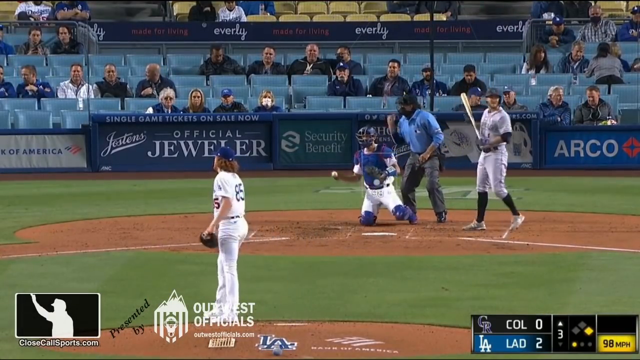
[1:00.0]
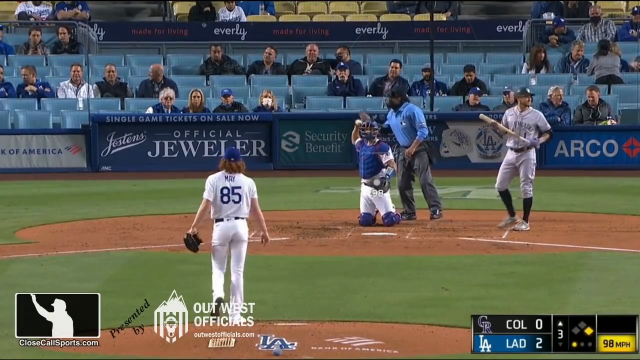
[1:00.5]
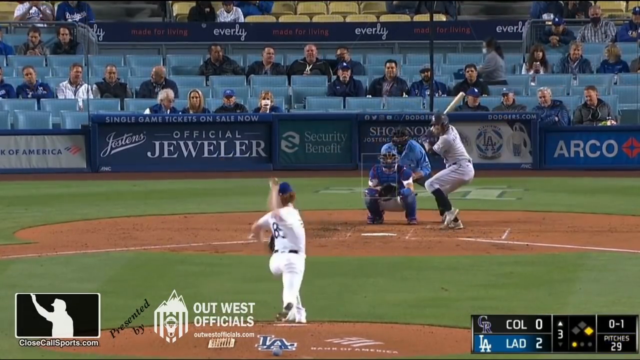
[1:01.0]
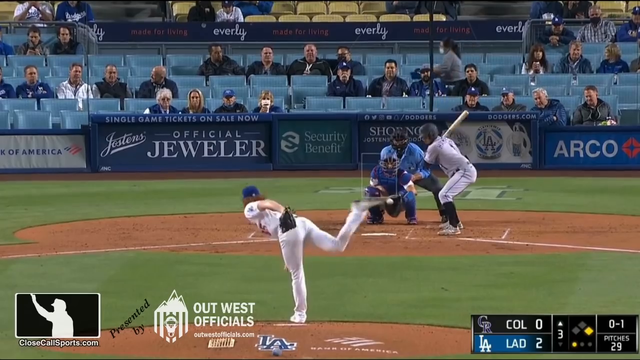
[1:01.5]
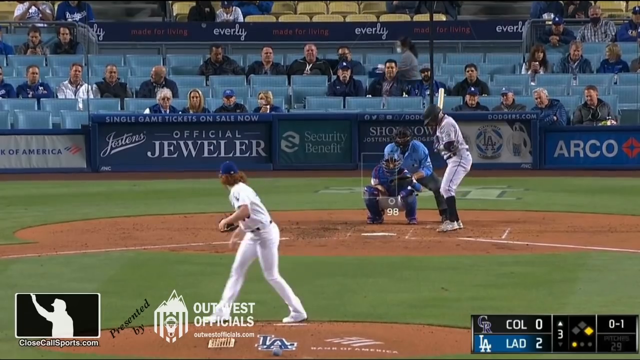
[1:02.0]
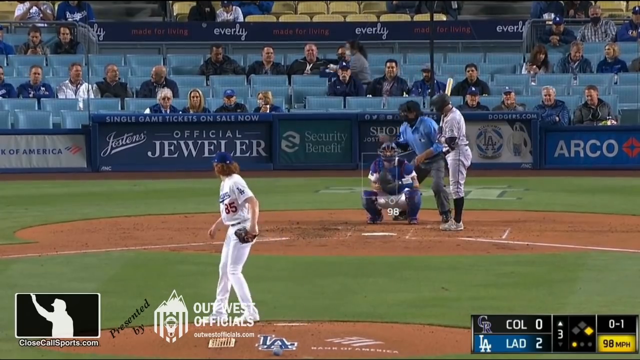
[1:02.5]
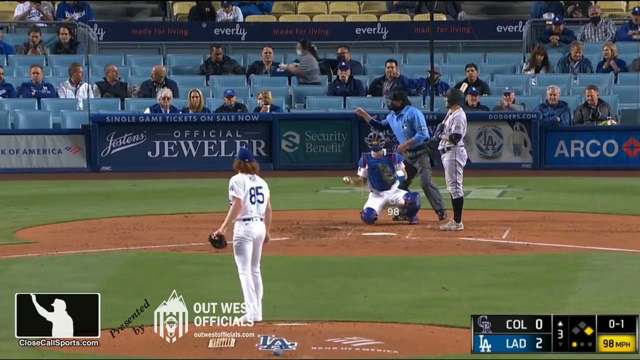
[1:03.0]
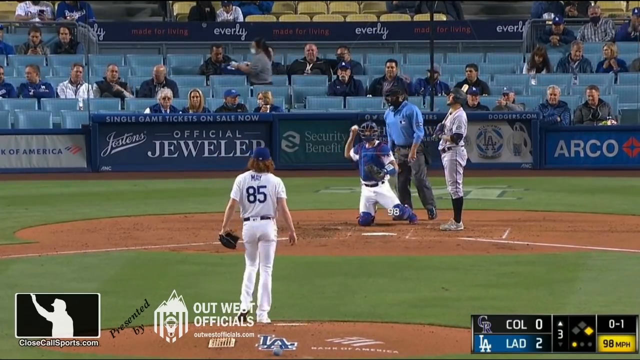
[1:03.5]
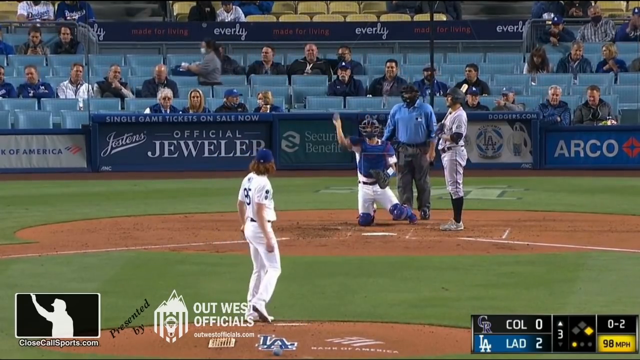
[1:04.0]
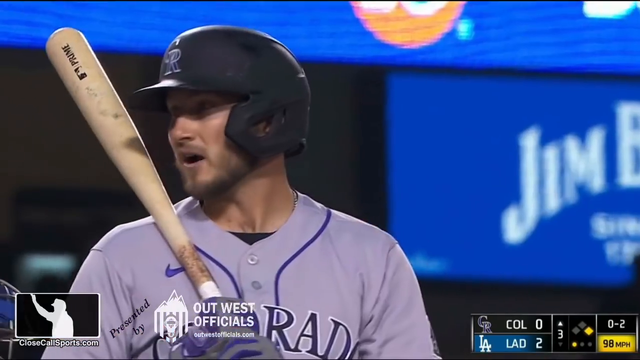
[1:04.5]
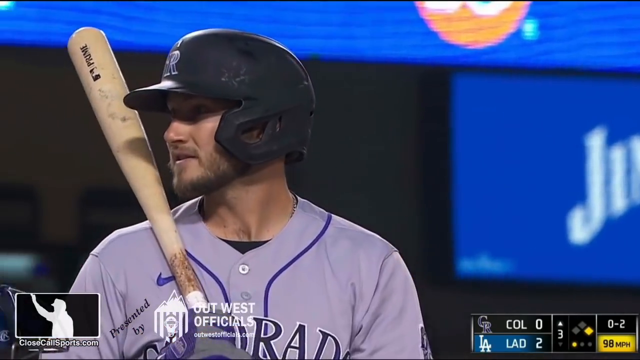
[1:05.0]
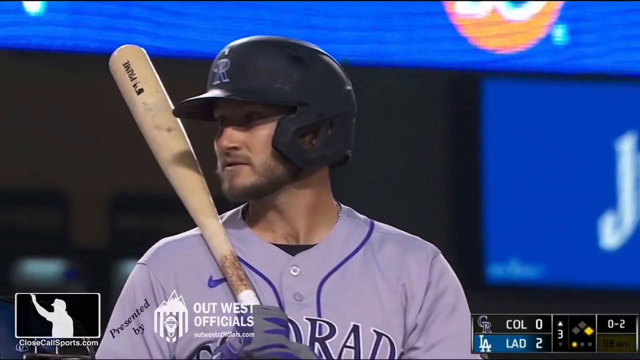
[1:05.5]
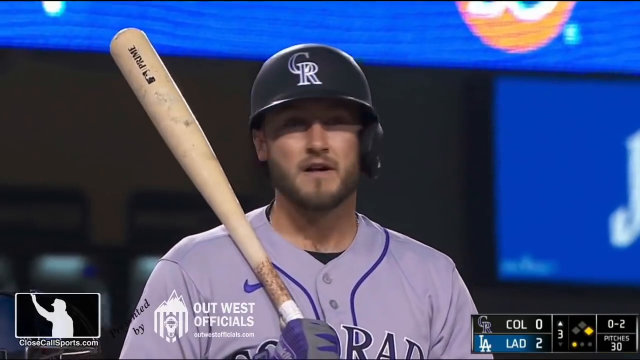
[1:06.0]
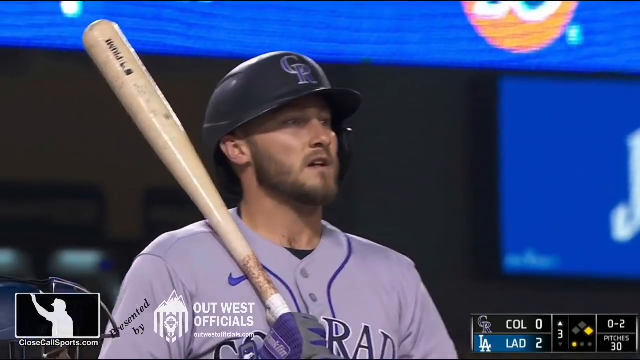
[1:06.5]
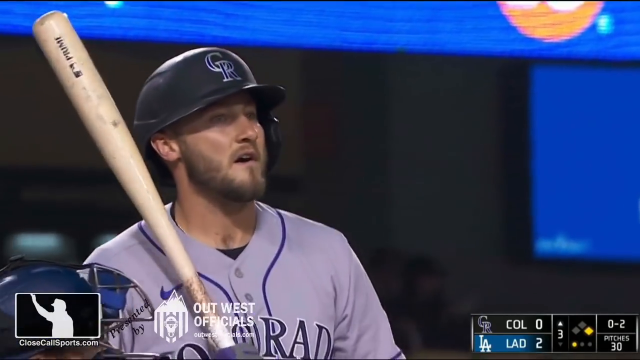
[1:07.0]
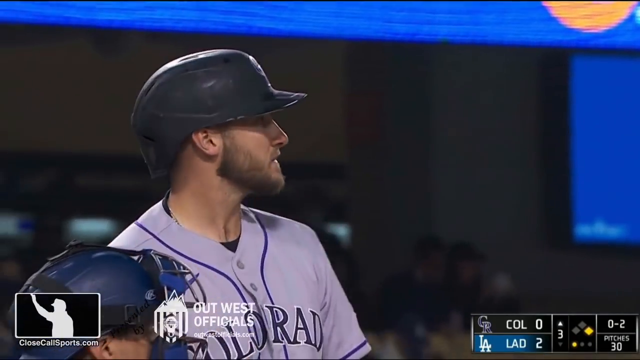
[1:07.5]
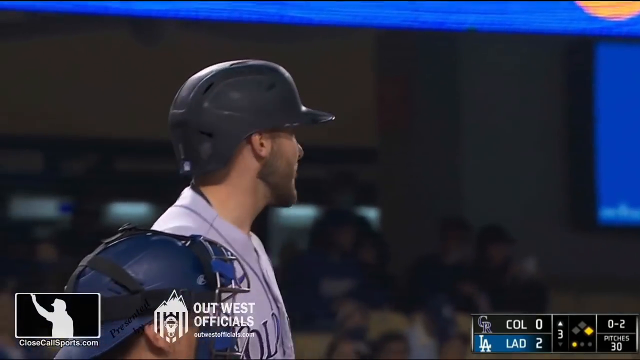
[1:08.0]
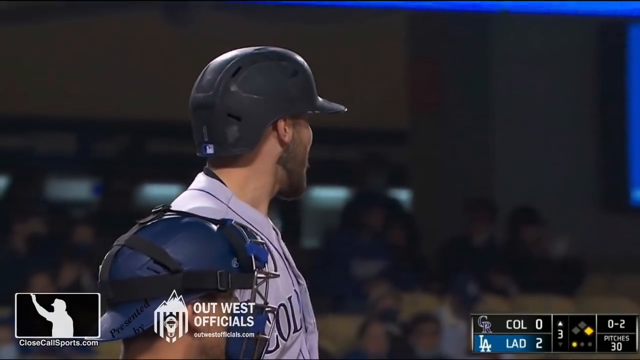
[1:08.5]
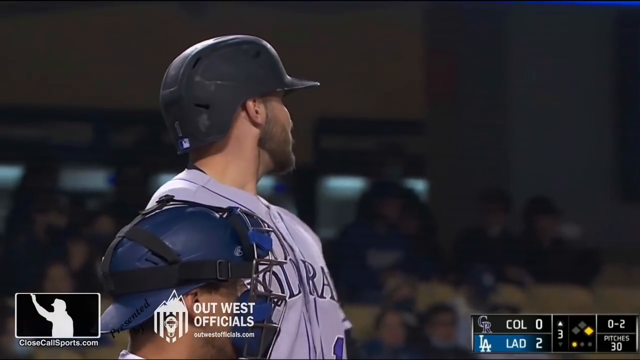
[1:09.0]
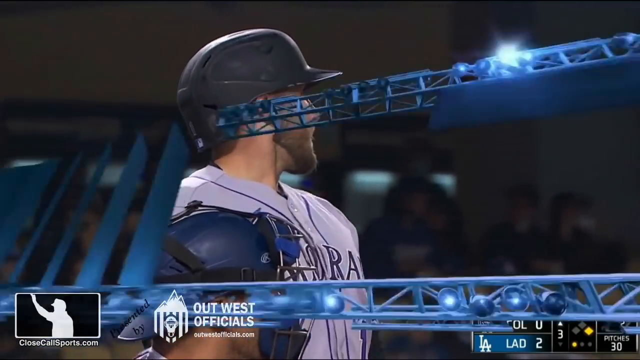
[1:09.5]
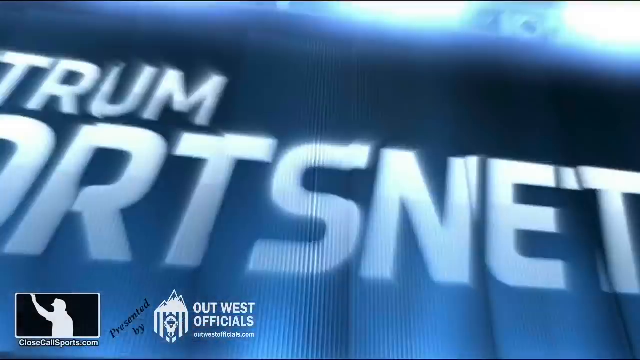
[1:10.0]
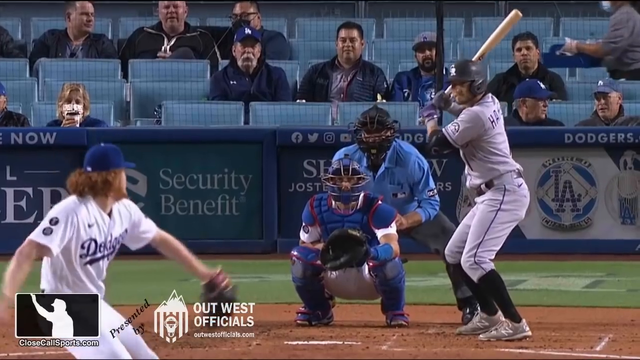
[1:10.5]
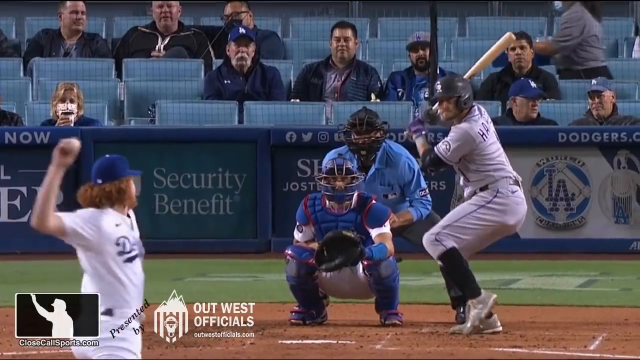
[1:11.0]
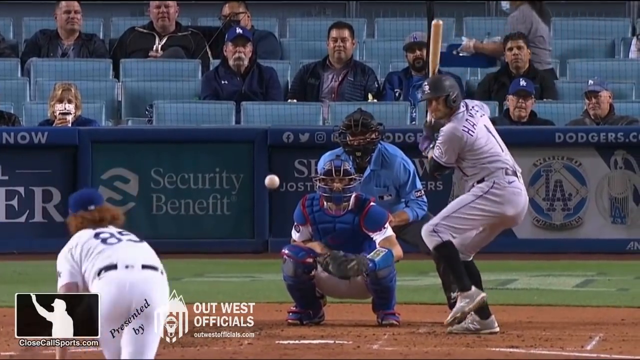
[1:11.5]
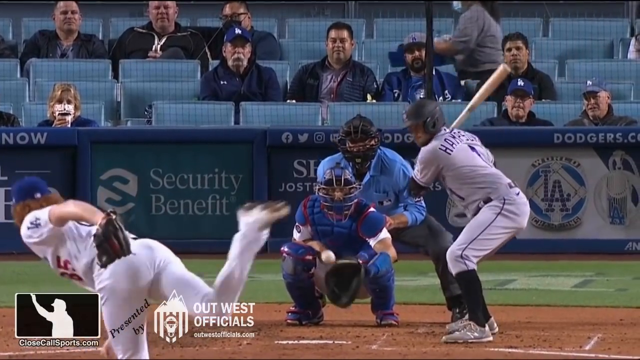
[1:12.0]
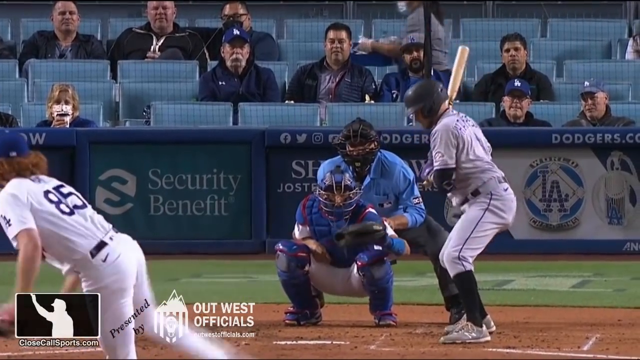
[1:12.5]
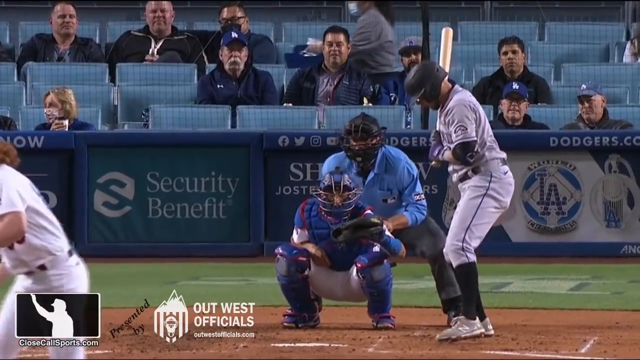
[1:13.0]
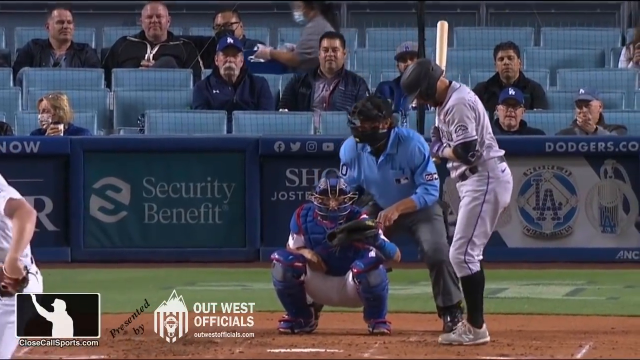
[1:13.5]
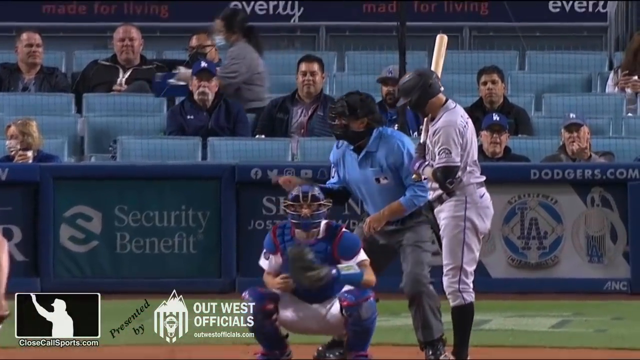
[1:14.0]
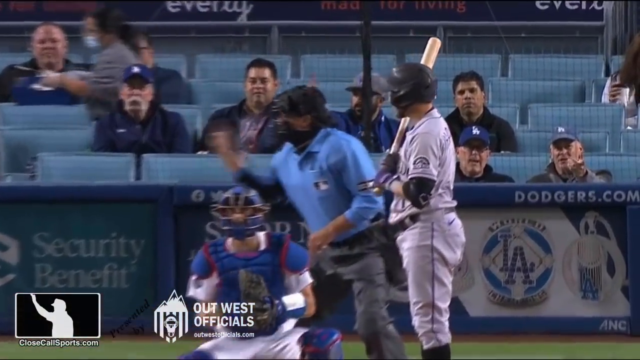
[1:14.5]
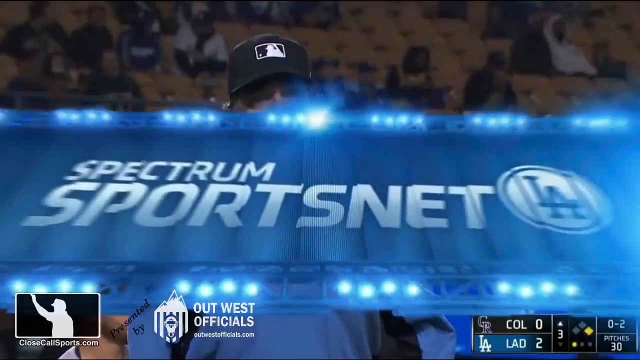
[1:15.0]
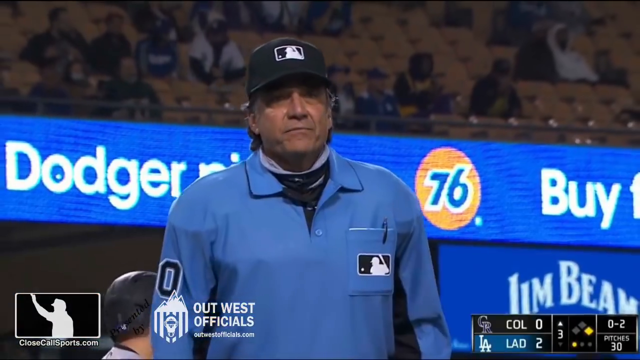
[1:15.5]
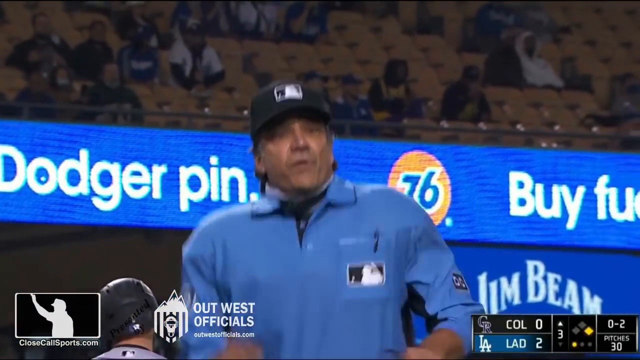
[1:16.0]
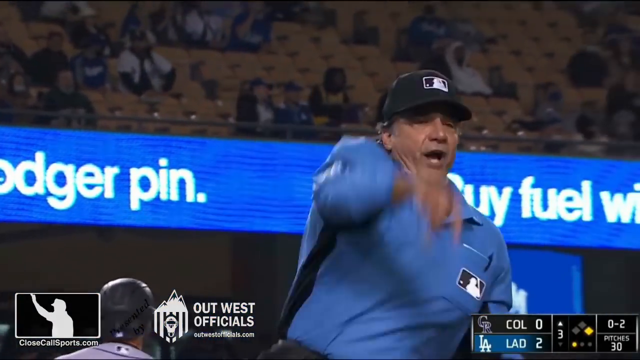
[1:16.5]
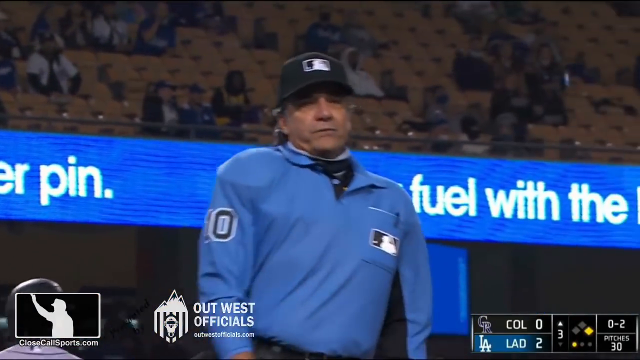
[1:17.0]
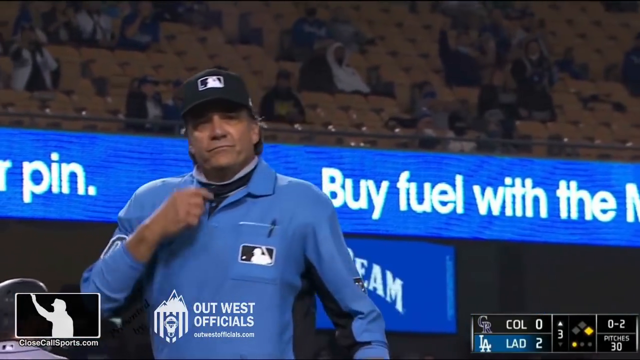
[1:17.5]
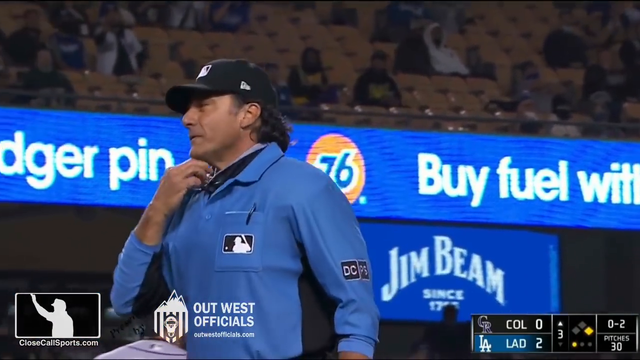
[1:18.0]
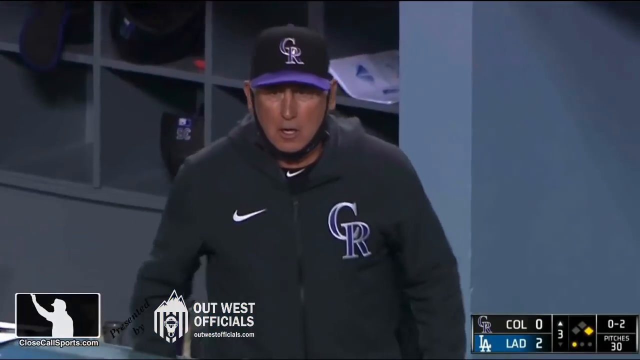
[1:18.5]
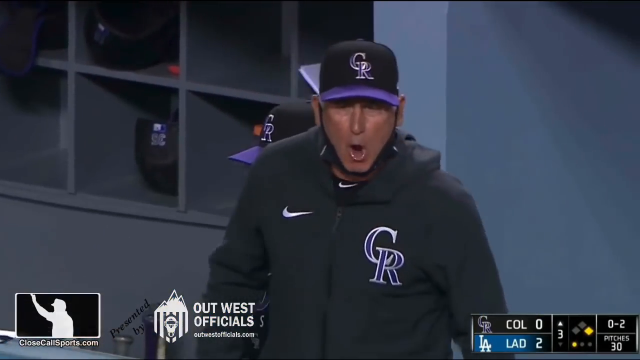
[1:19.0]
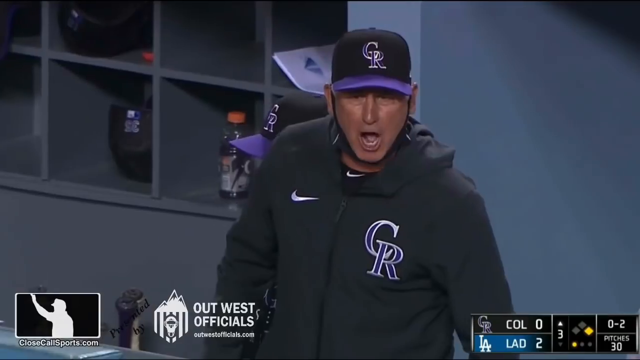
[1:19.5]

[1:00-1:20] The Colorado Rockies continue bickering with the umpire over his calls, which are clearly out of the zone but are still called strikes. The Rockies hitter stands with his wooden bat, looking at the umpire in a little disbelief, then takes a deep breath and steps out of the batter's box while a replay shows the last pitch called a strike, which was clearly about four inches low. Immediately, the umpire throws his fist up in the air and appears to eject the Rockies manager in the dugout. The manager fires back, appearing to say some explicit words toward the home plate umpire, and continues to bicker with the umpire as the scene ends.